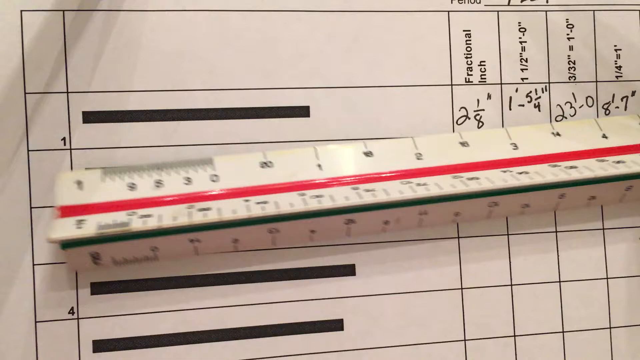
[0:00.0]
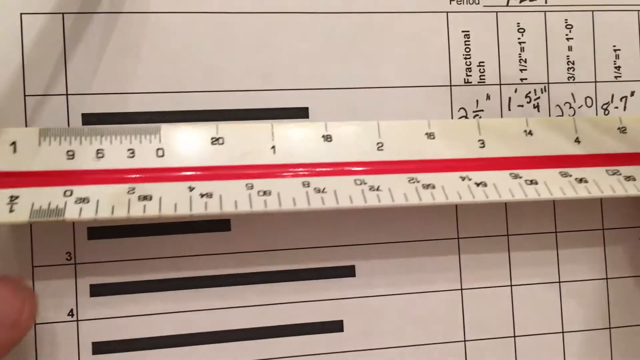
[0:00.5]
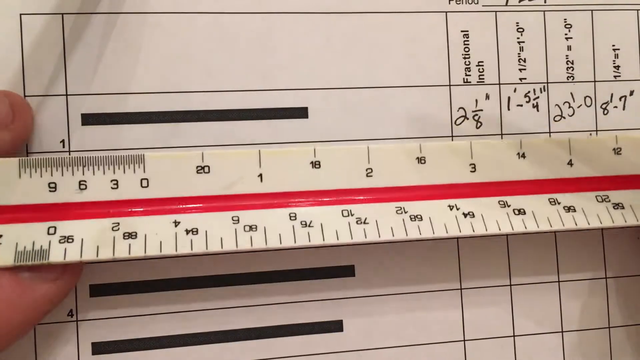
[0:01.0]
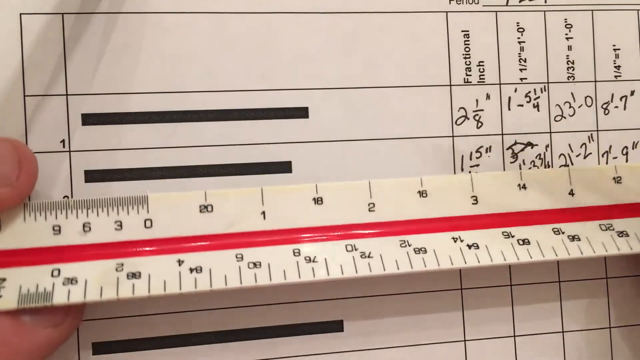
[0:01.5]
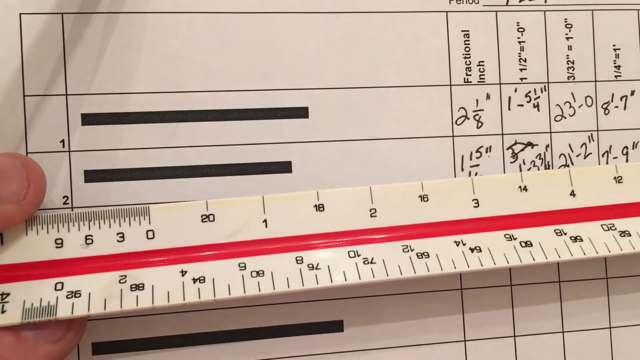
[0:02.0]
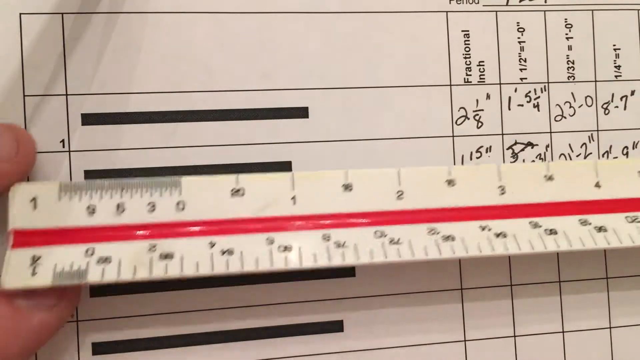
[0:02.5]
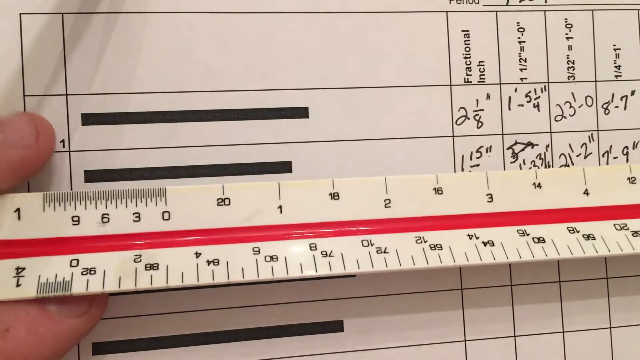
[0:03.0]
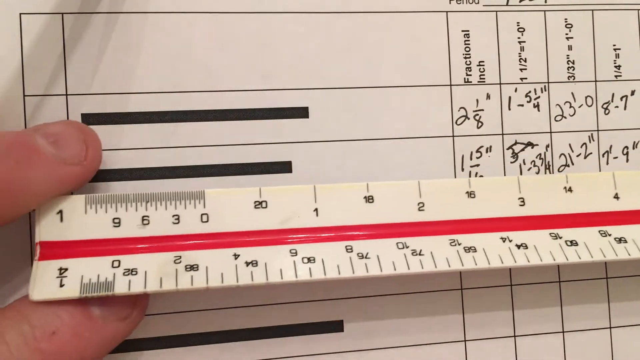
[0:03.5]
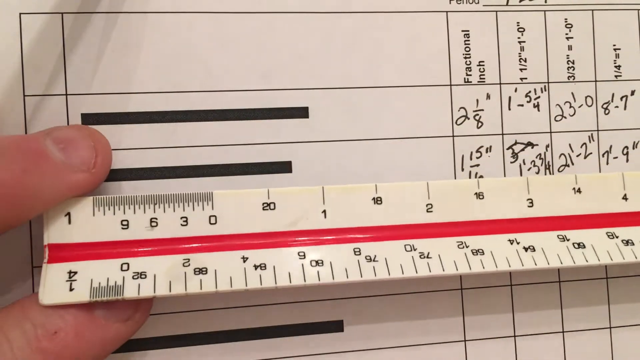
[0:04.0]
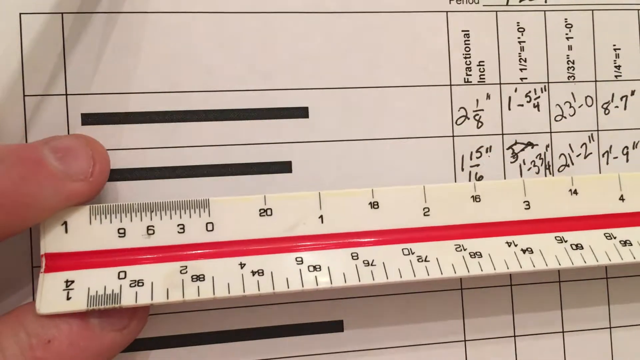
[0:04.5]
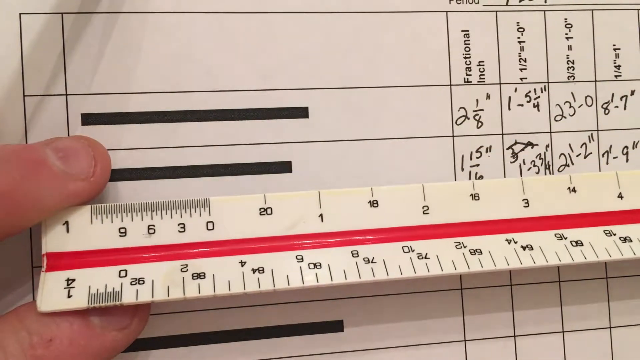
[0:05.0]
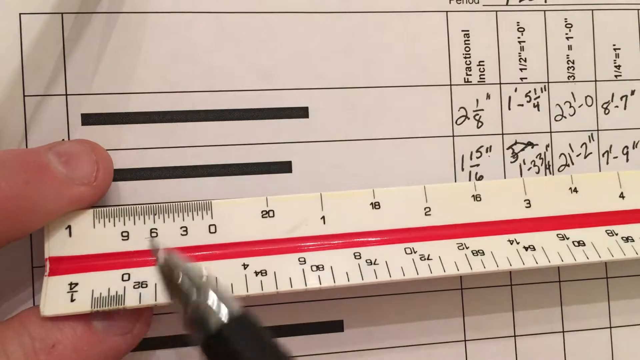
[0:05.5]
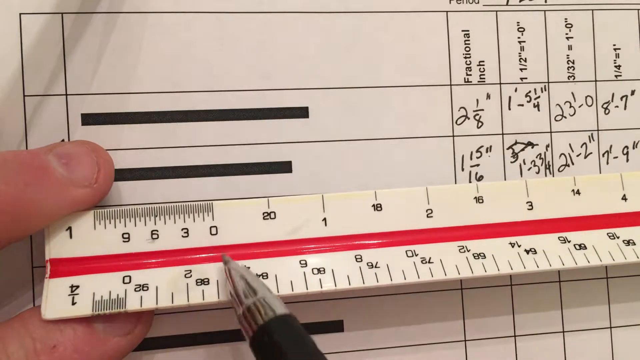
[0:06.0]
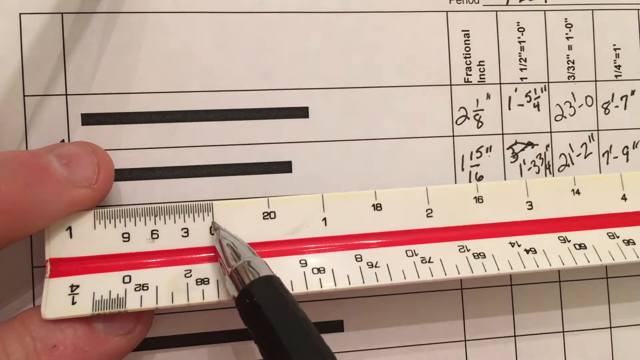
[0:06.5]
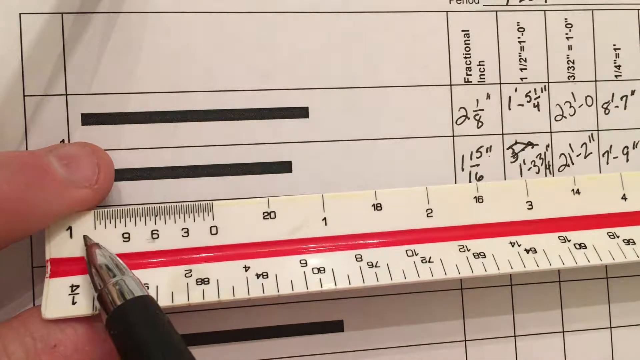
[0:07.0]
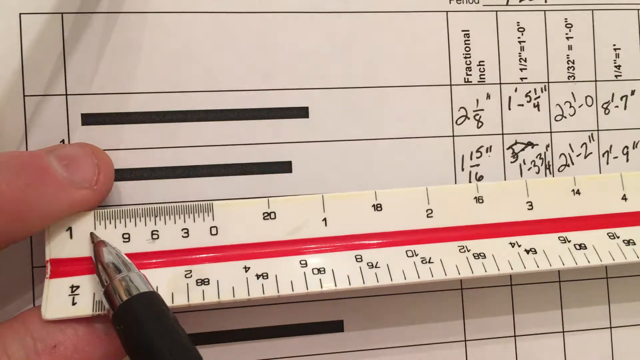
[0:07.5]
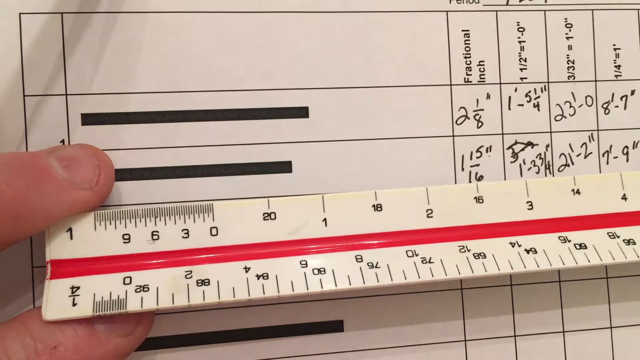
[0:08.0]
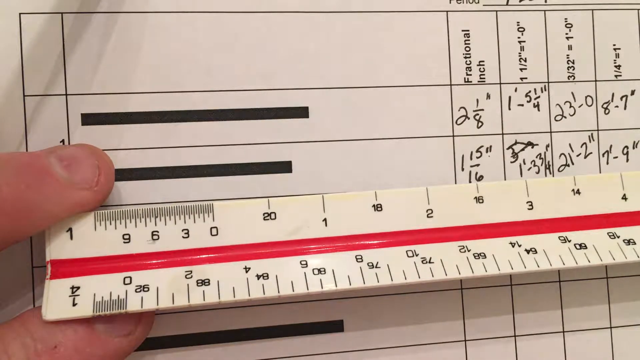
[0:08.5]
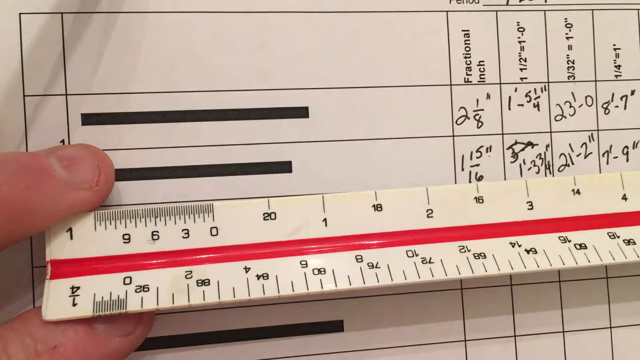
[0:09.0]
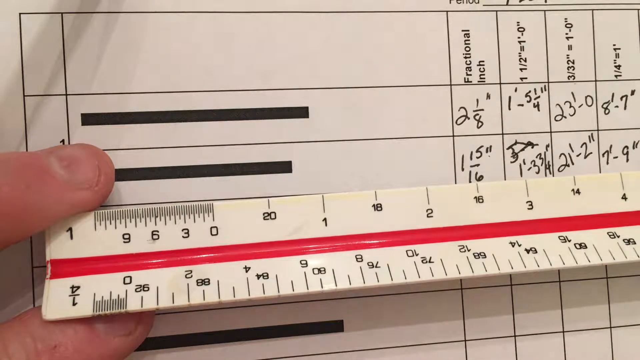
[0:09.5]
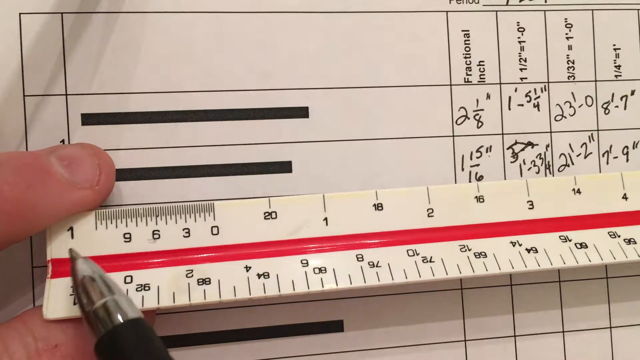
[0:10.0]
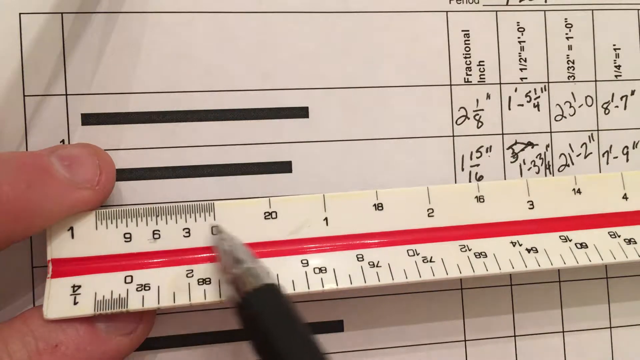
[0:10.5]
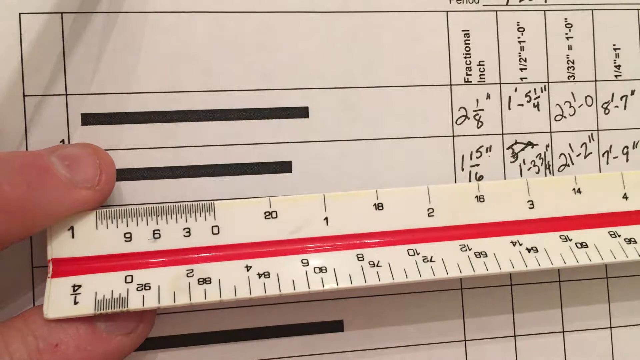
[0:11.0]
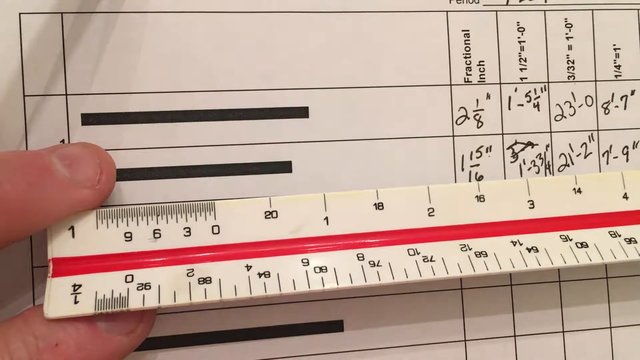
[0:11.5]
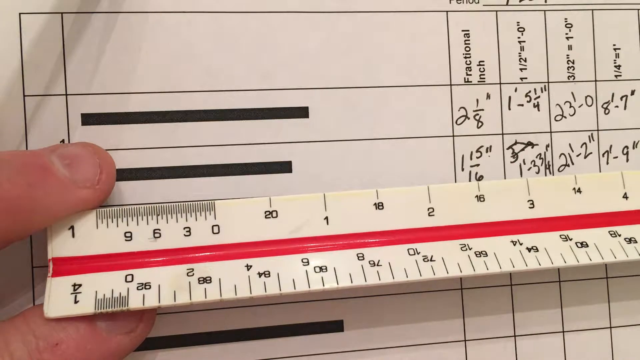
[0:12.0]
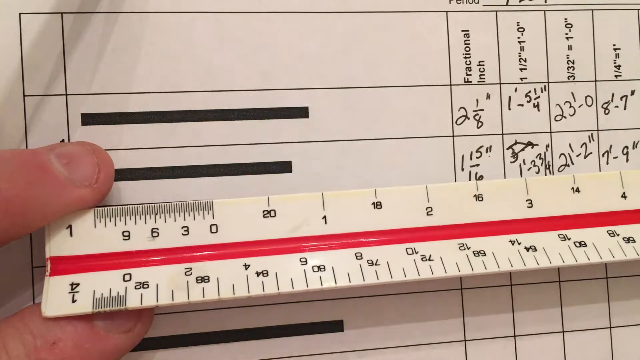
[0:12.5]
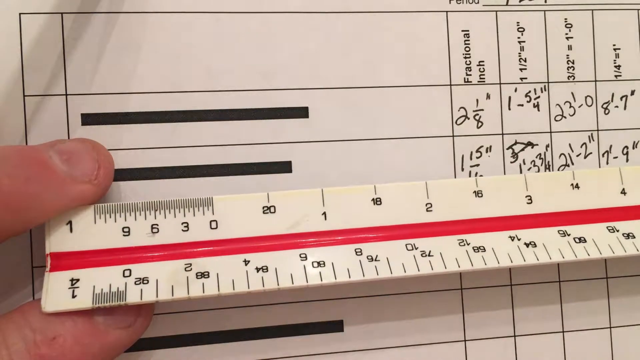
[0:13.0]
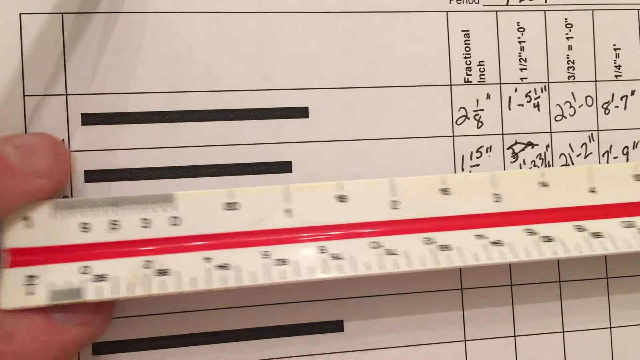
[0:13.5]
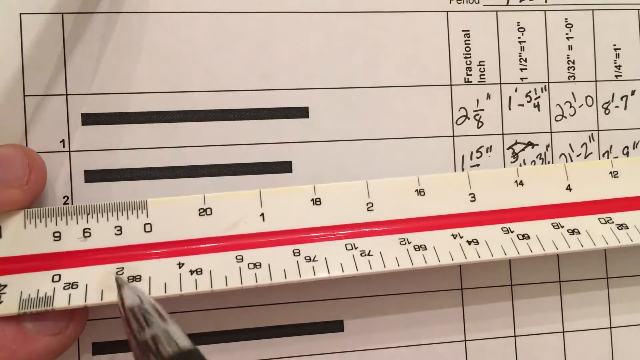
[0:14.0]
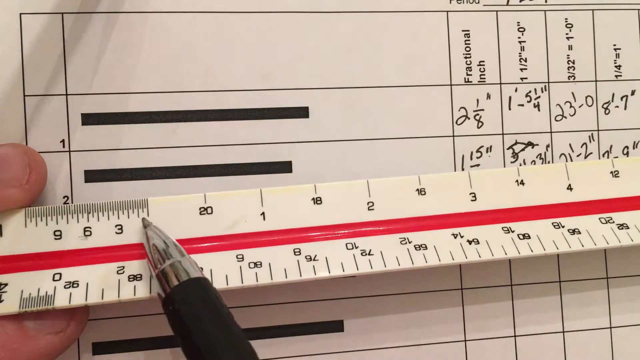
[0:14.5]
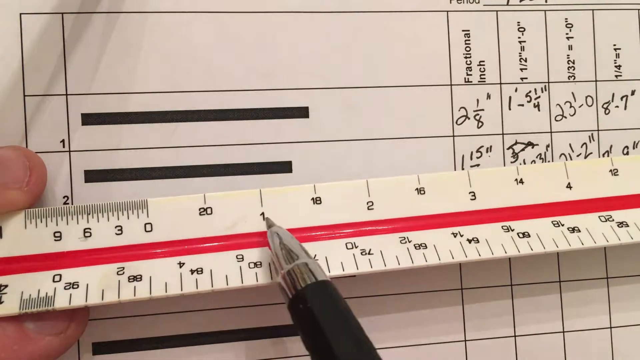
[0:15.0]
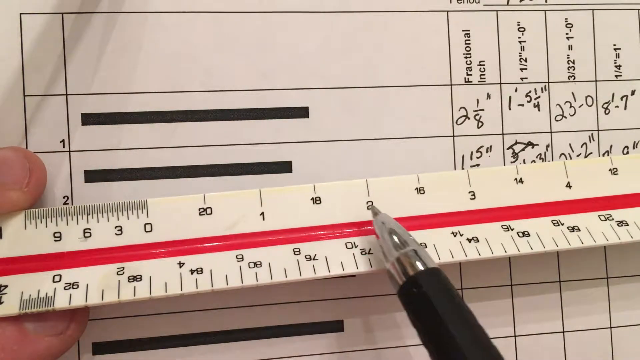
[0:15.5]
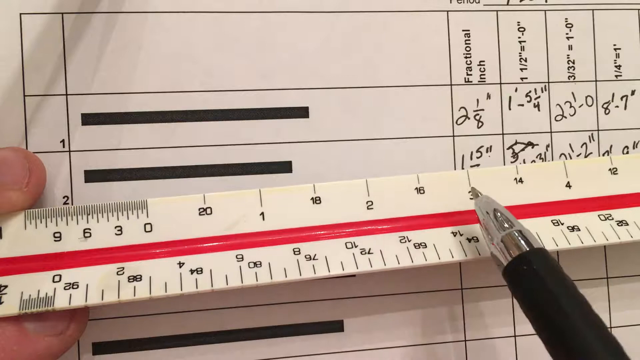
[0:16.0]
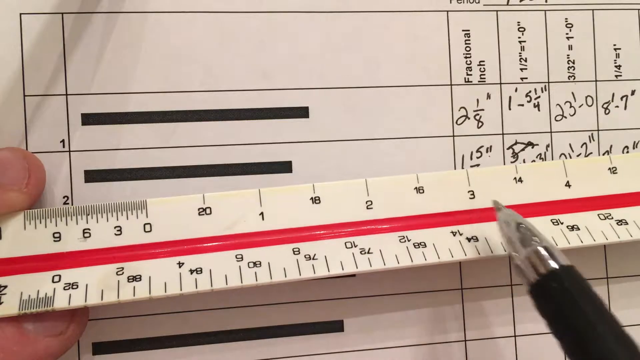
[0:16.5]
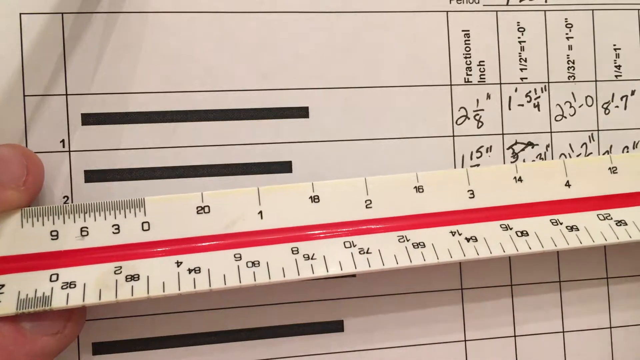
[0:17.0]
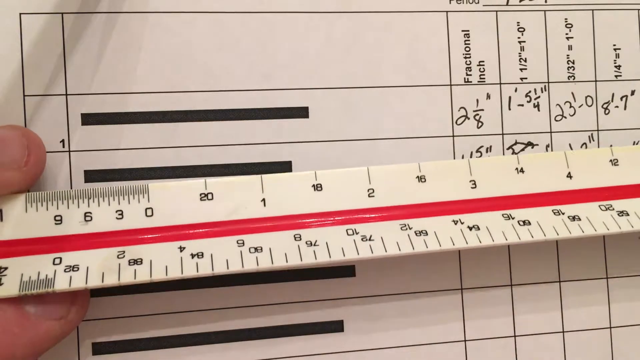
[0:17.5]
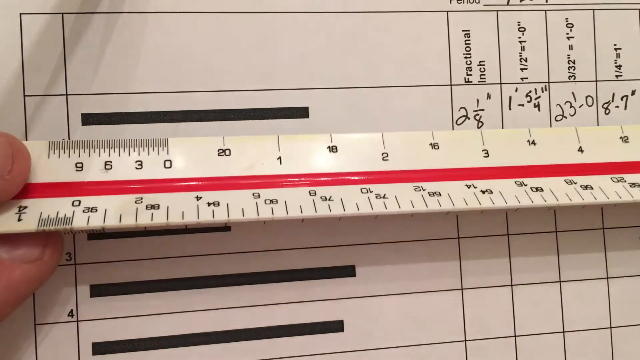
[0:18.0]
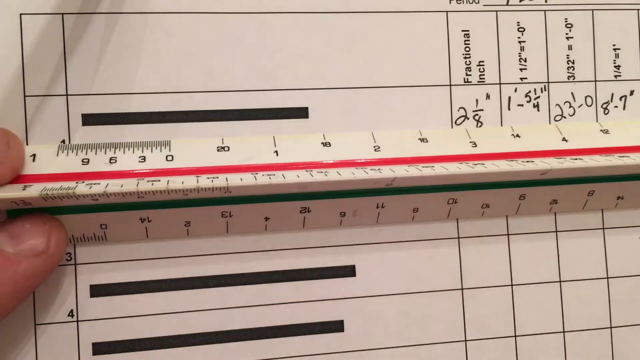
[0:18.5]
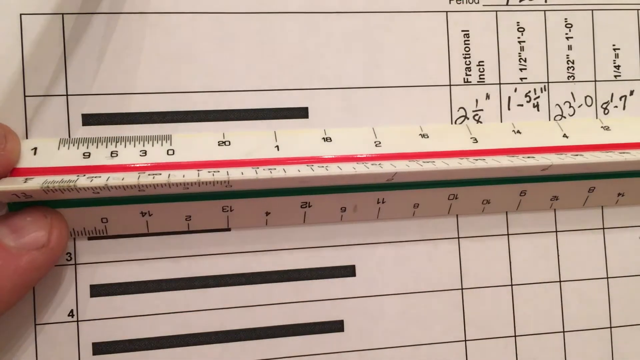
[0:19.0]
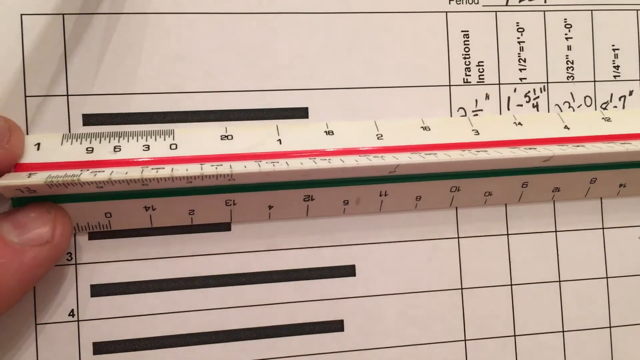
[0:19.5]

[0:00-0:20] Someone holds a cream-colored ruler with a really thick red horizontal line in the middle that looks almost like it was drawn on with a marker. Along the top there are several different sections marked for measurement, each with labels. It is not a traditional ruler: instead of starting at zero, it starts at one, then goes to nine, six, three, and then zero, which may be some kind of finer fractional subdivision, possibly quarters or thirds. After zero it continues with the typical one, two, three, four, and in the middle of each section it also says 20, 18 and 16, apparently indicating multiple units of measurement on one ruler.